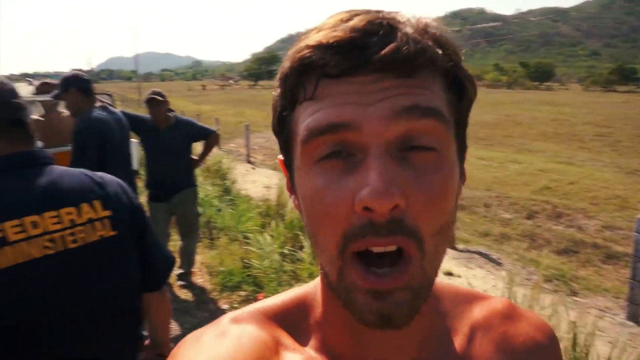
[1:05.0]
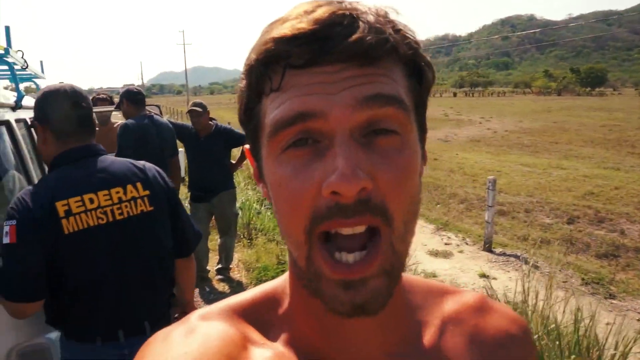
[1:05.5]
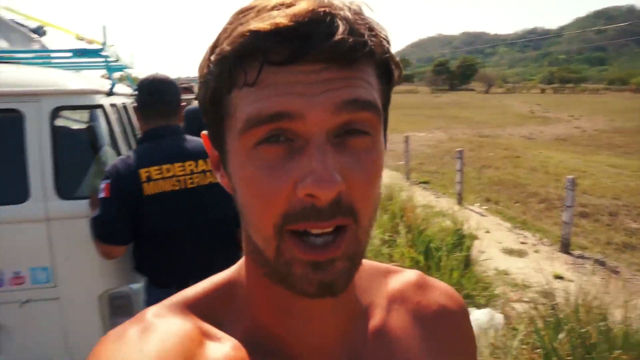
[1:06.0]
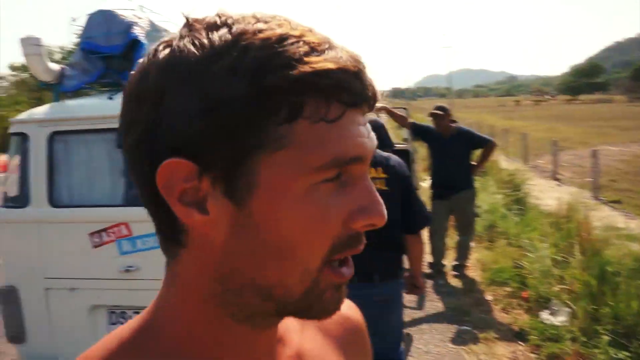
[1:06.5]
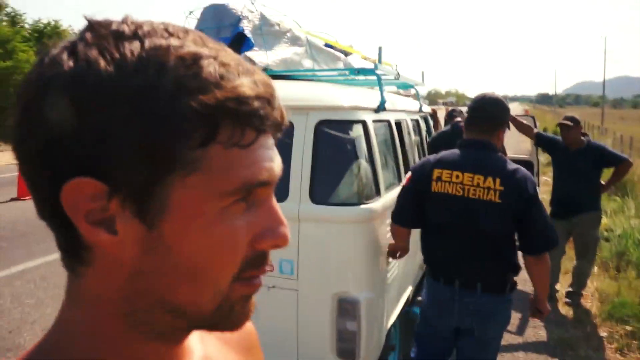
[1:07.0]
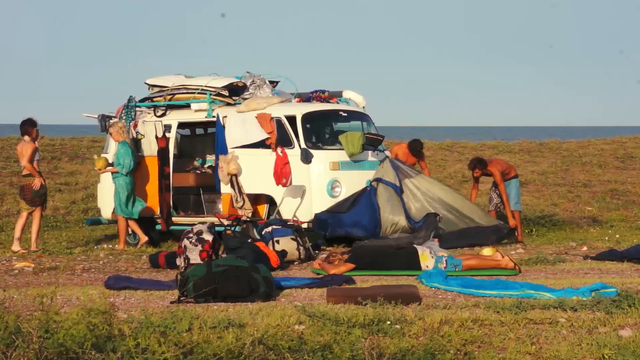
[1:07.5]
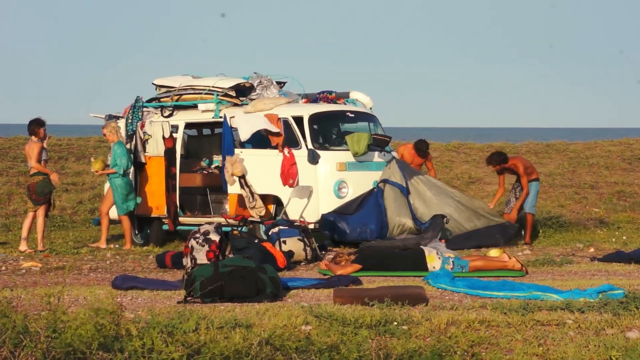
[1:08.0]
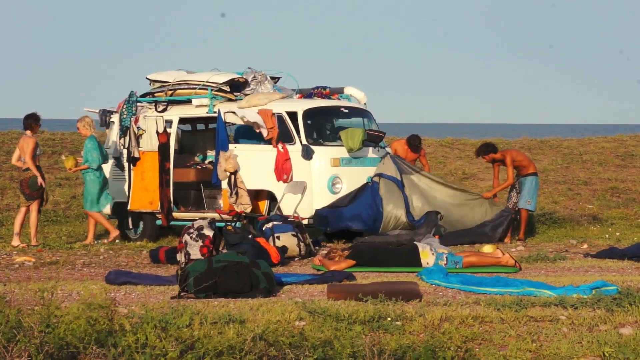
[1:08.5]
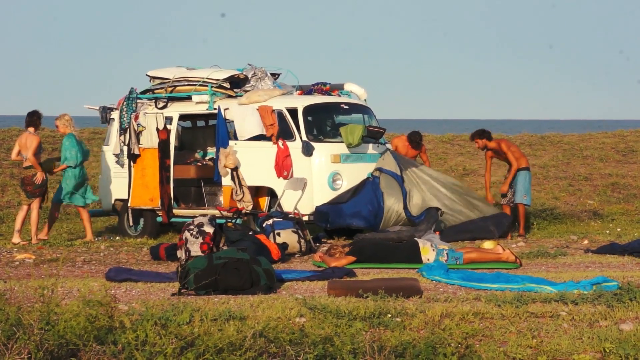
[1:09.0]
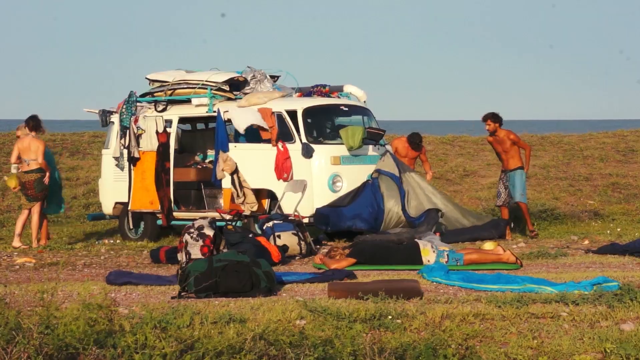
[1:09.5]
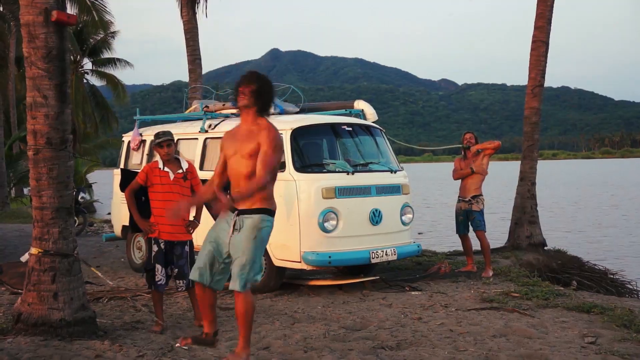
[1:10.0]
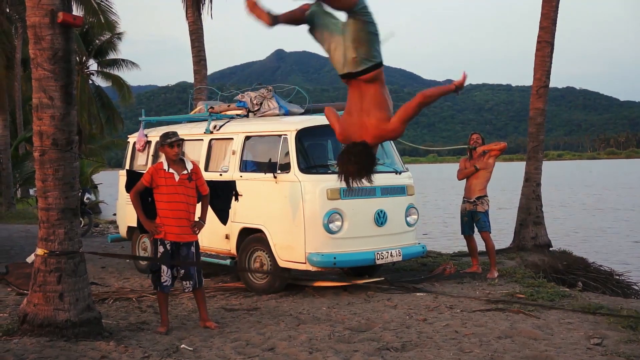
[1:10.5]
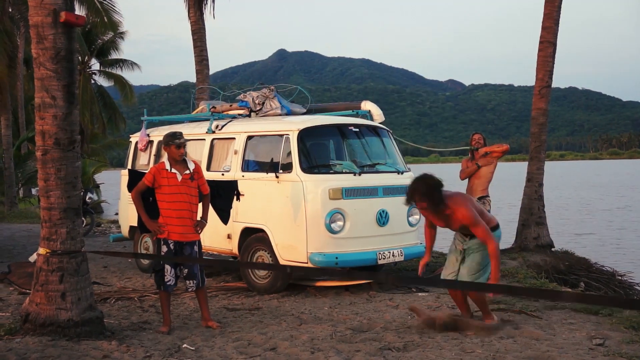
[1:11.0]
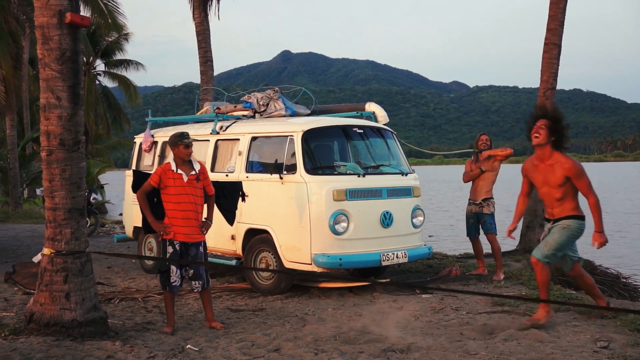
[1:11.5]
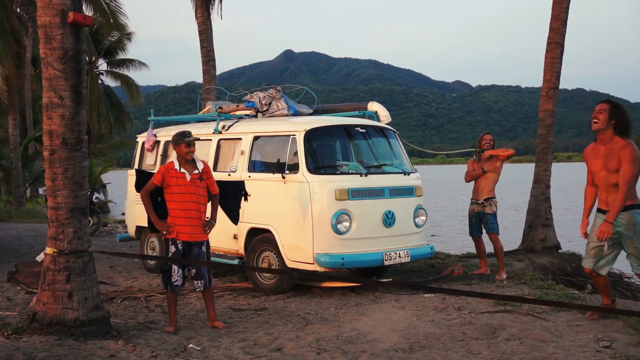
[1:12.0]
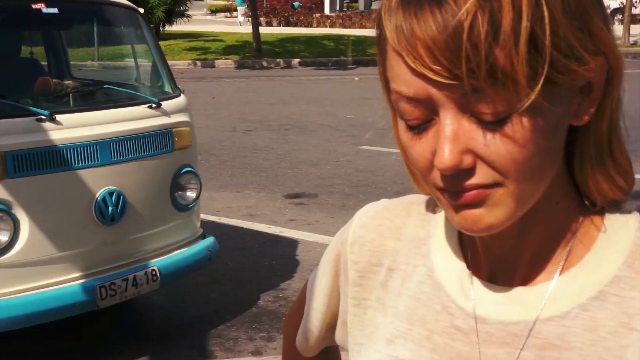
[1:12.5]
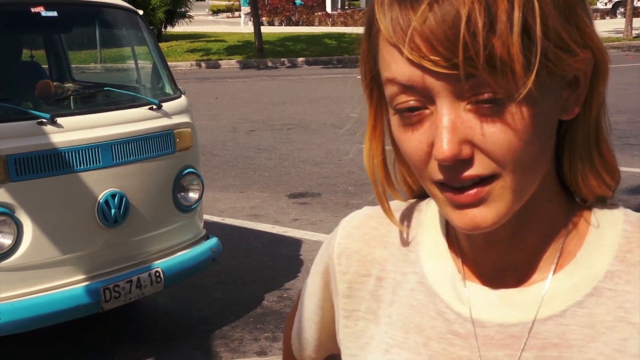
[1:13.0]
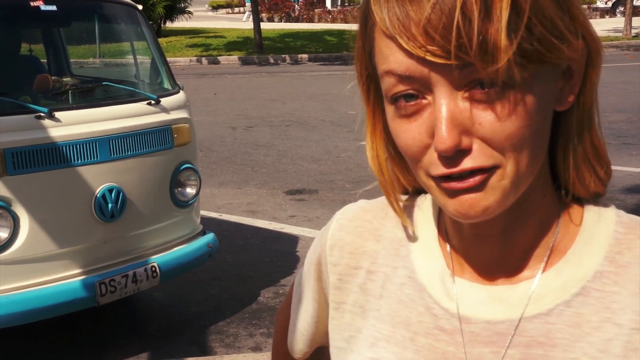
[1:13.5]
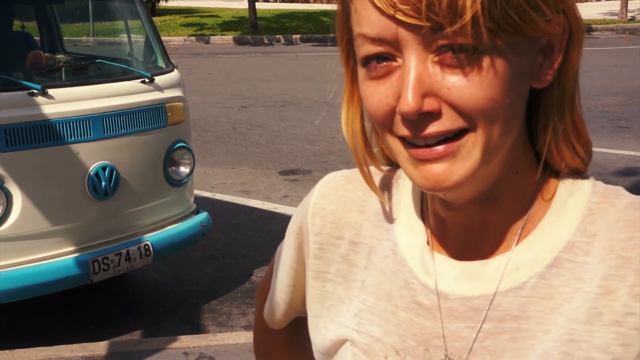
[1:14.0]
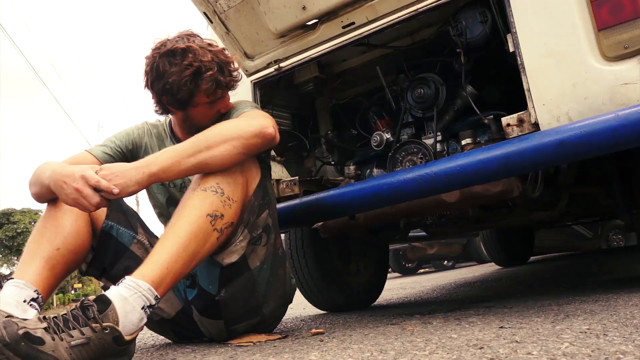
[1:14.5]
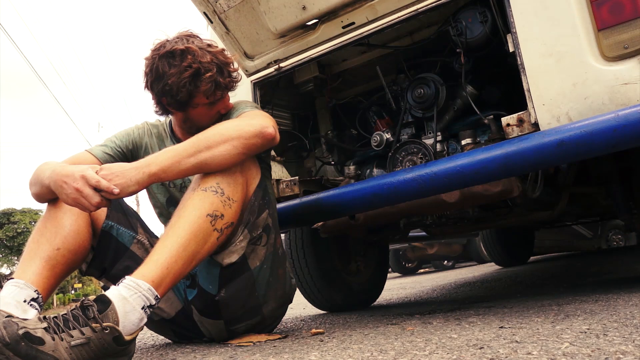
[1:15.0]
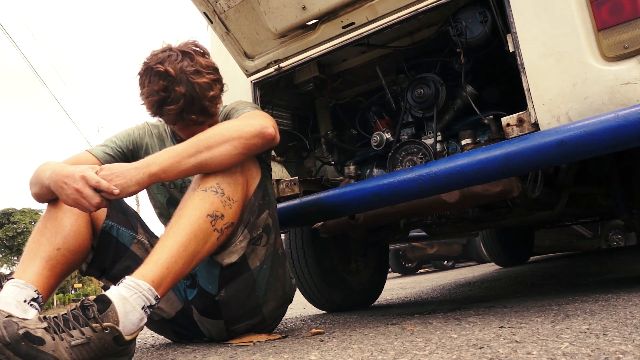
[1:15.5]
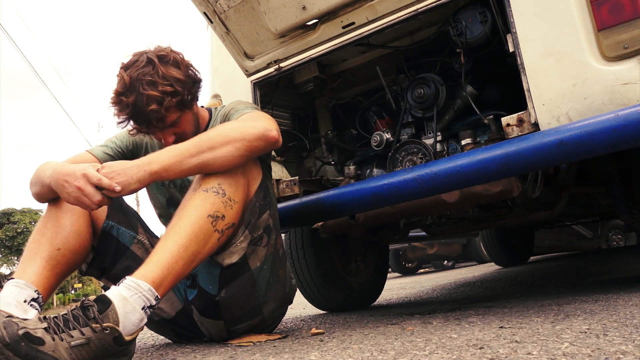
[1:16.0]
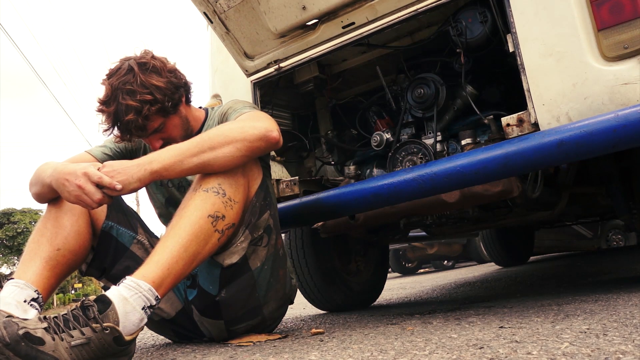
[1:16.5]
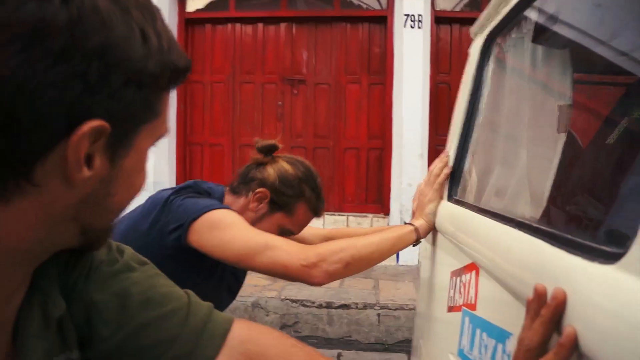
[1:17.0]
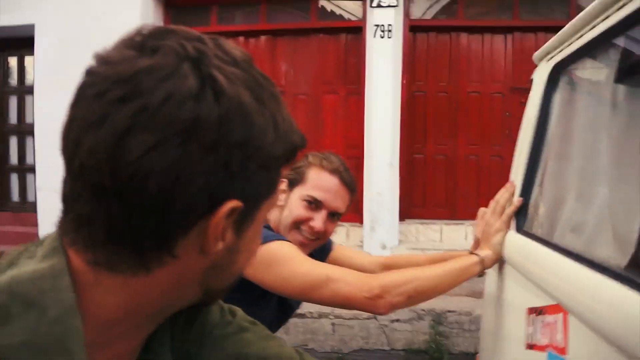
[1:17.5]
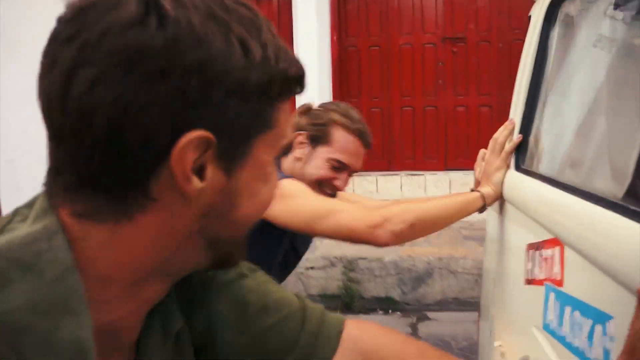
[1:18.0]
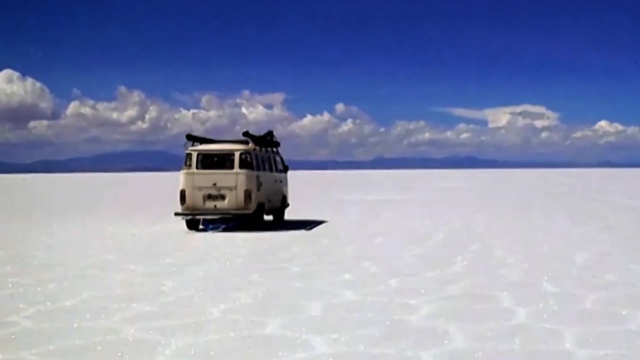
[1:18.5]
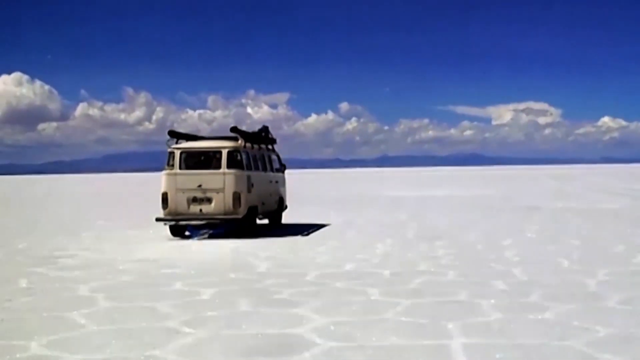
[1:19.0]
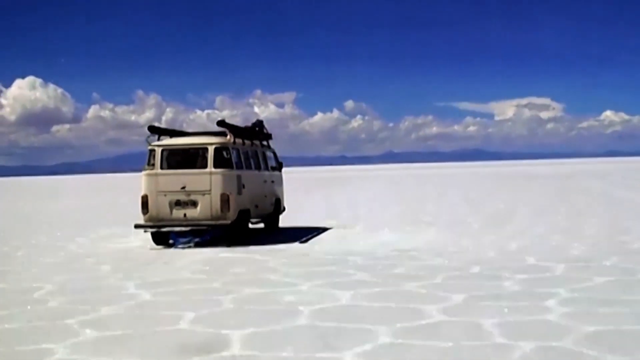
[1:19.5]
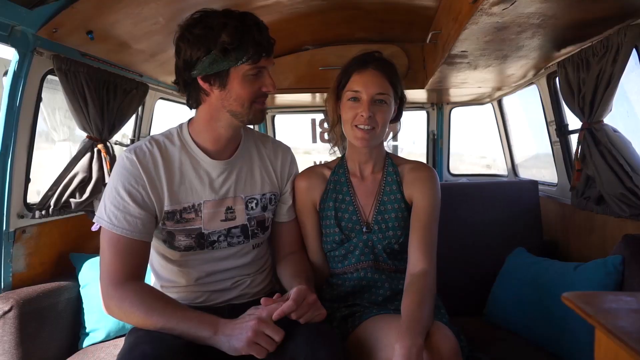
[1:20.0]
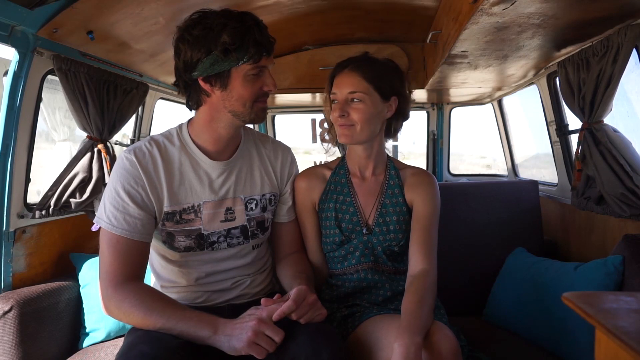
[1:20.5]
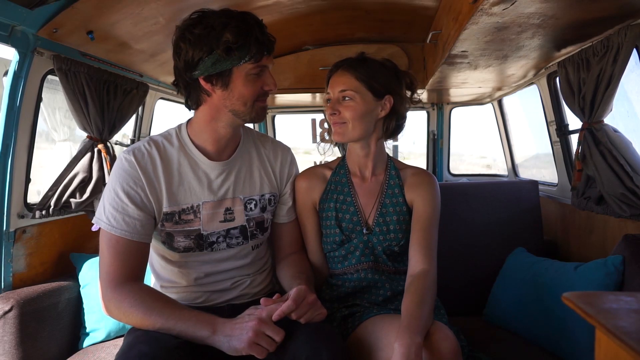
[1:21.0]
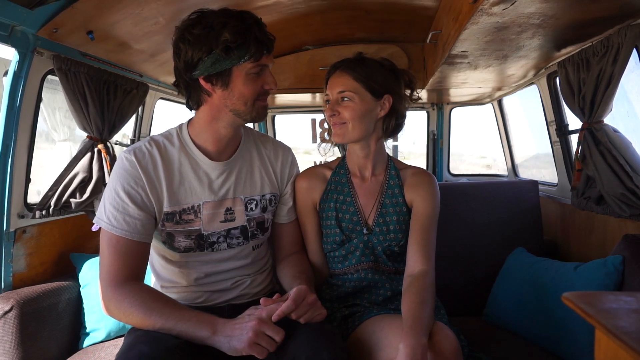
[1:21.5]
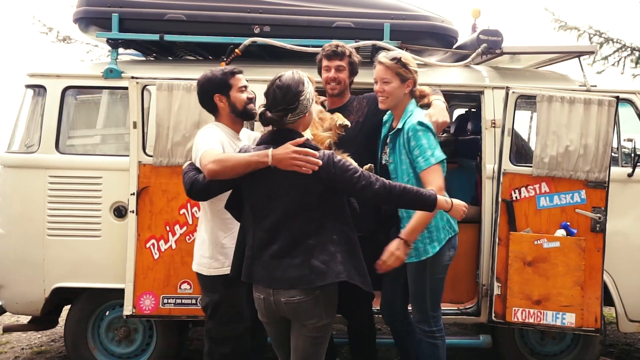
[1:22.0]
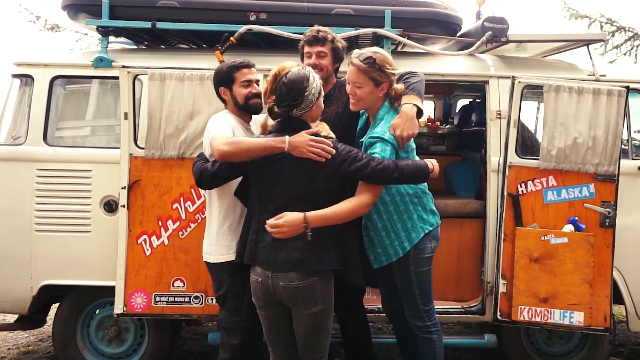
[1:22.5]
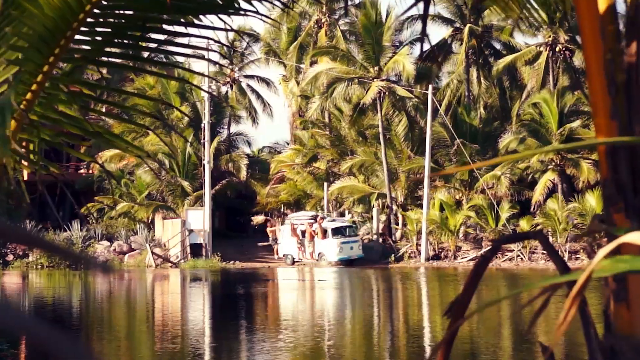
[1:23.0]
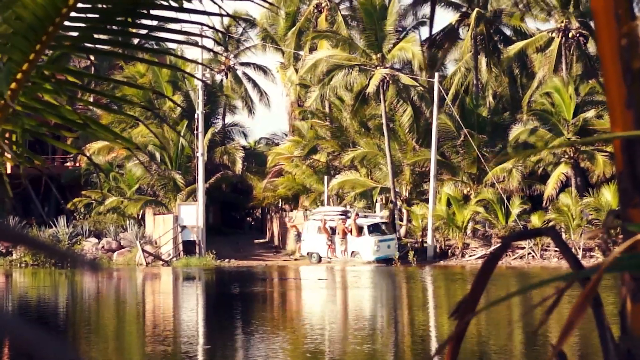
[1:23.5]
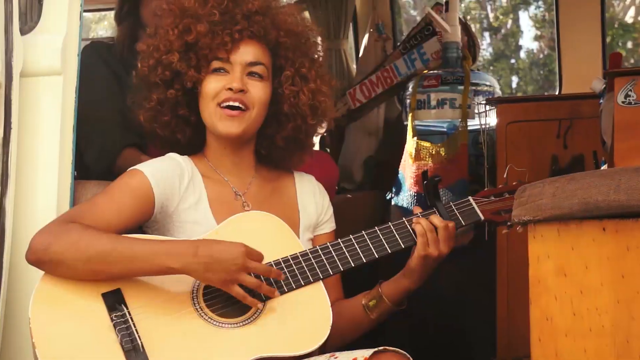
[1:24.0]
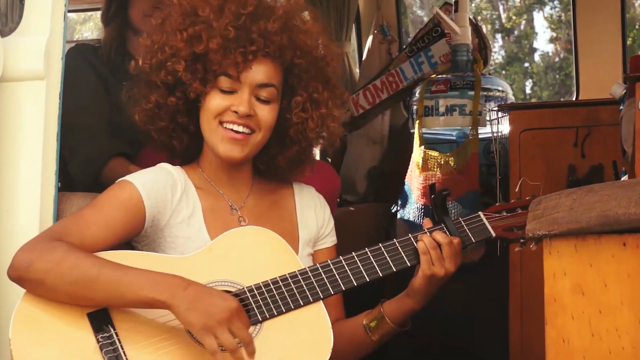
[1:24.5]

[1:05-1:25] Ben talks. They pitch a tent outside, and there appear to be about ten people. One of the girls looks very unhappy, and Ben looks very unhappy because the van looks like it broke down. Four people are shown. Many different people keep showing up; the guys and the girls change, and the only consistent one is Ben, who is possibly picking up people along the way. They drive, camp in a field and on what looks like a beach, push the van, drive across something like a salt bed, and drive across some water. There is a guitar player, and lots of people are lying in a field. There seem to be several two-man tents, maybe five. It looks like they have had to fix the van a couple of times. The subscribe button appears in the bottom right-hand corner.